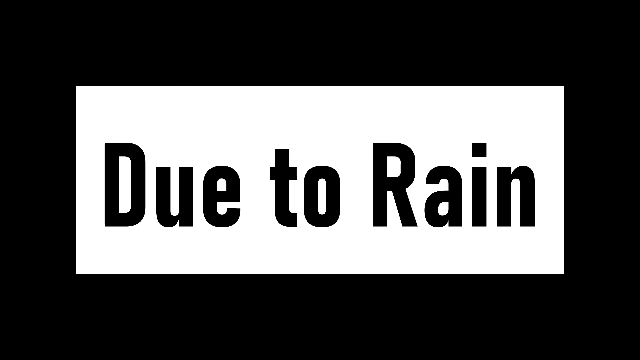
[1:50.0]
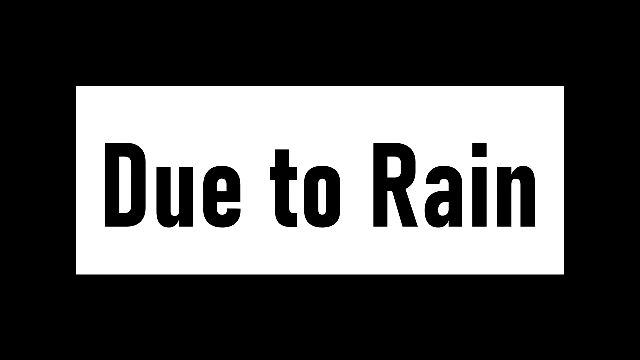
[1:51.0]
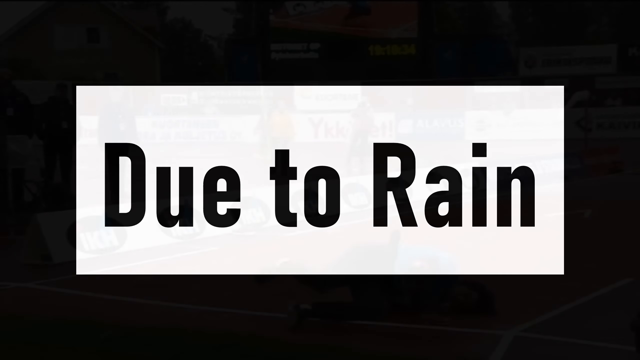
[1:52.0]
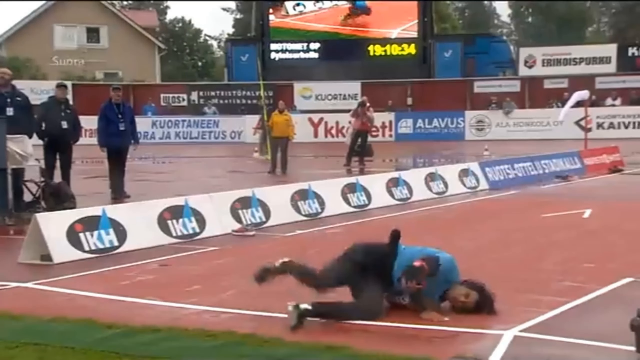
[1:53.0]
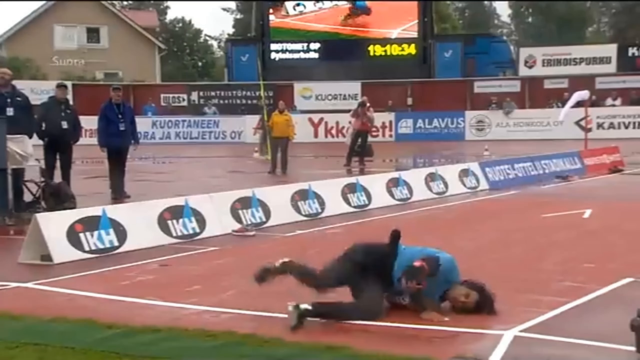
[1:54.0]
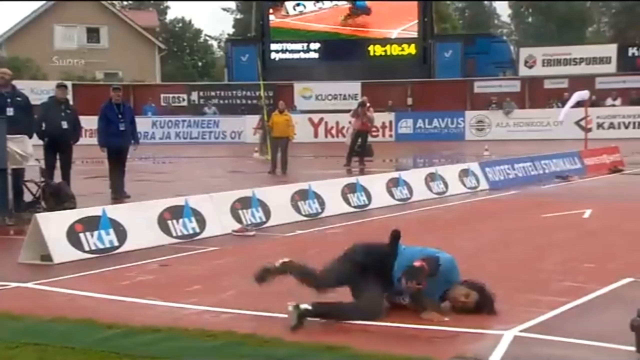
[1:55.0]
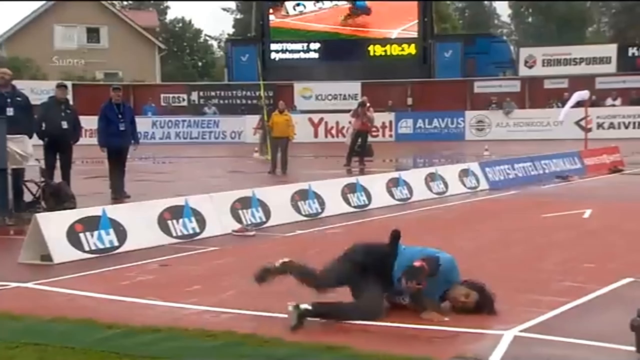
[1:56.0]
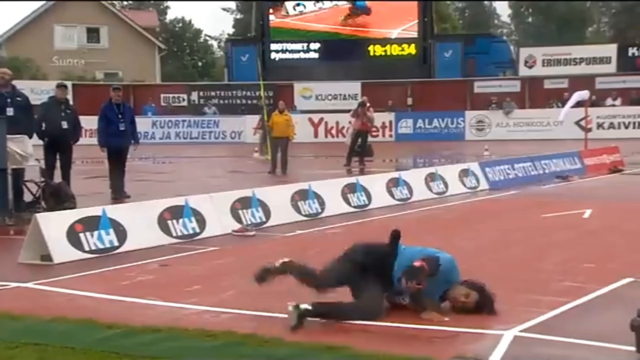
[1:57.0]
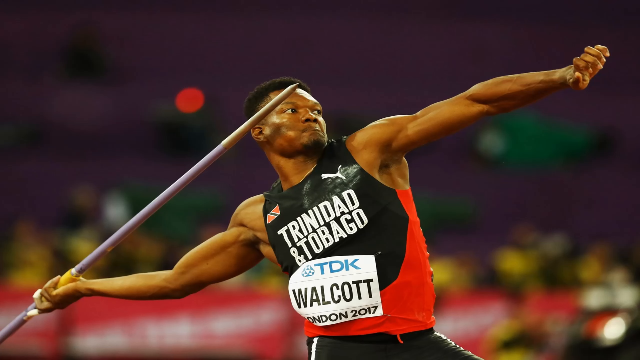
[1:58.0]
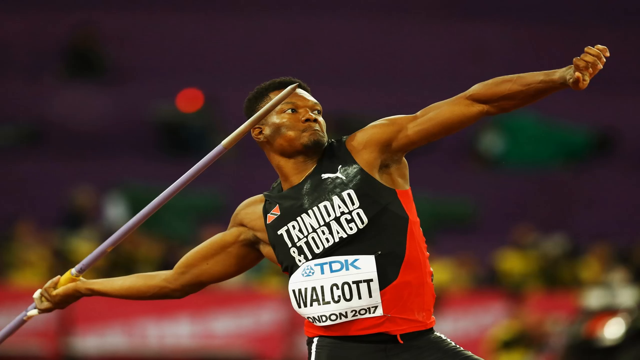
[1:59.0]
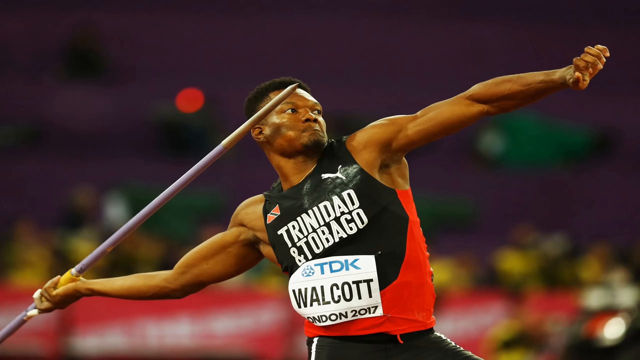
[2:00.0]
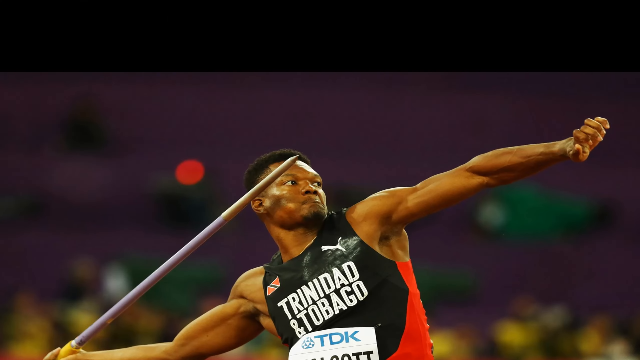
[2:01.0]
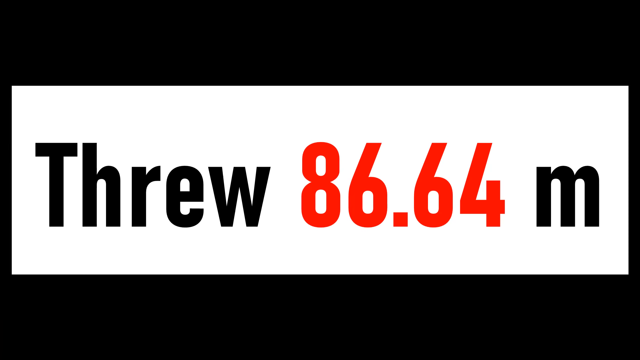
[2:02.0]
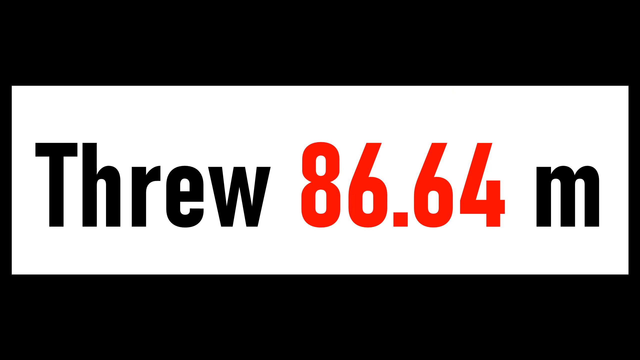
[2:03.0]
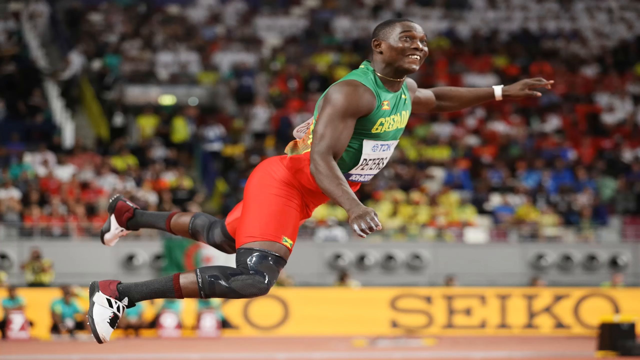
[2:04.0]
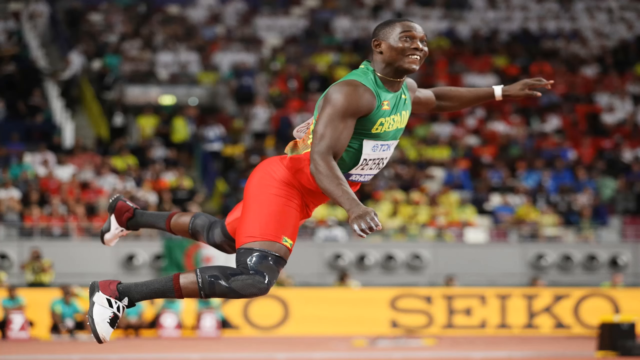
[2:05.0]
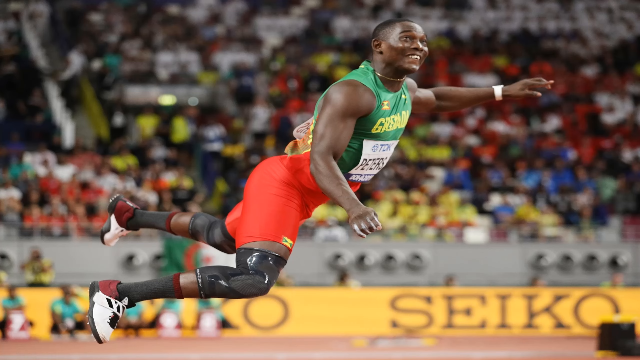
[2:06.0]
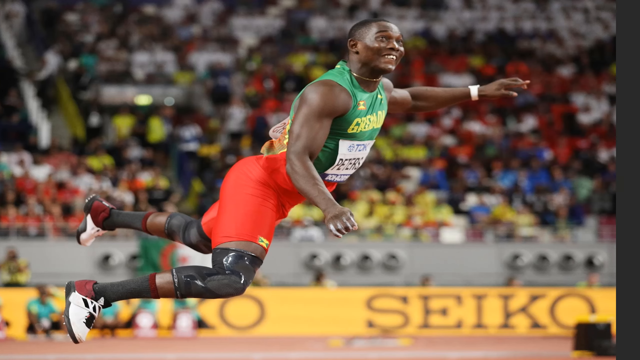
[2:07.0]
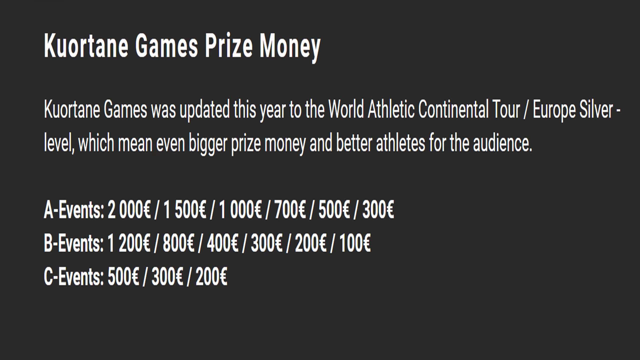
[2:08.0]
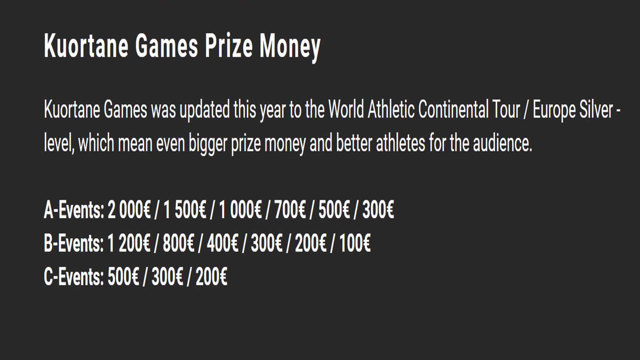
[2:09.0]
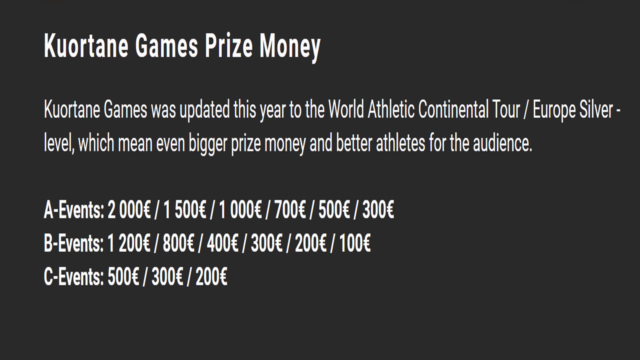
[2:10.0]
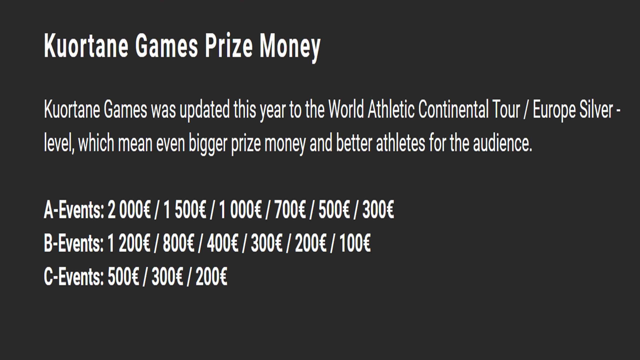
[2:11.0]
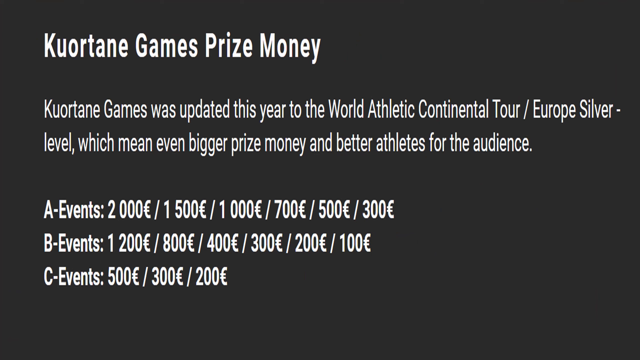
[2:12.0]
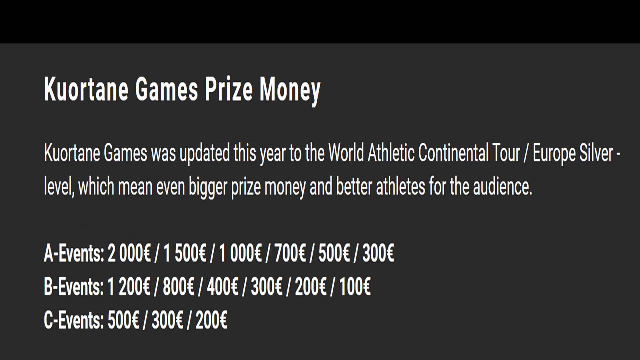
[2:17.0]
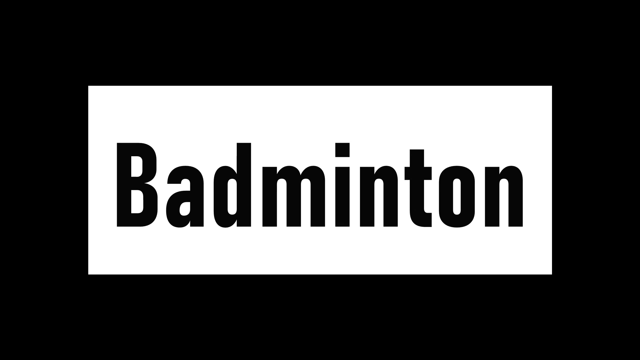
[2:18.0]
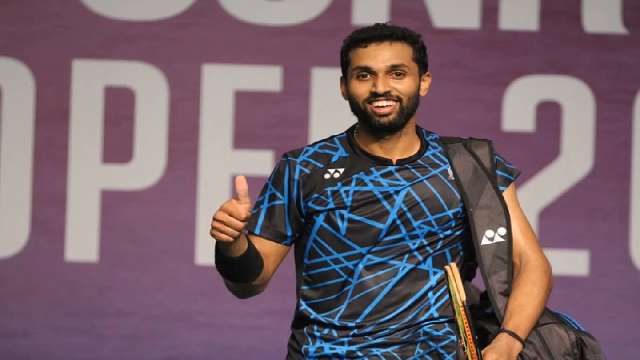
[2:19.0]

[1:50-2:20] Writing on a white screen reads "due to rain" in black lettering. The view moves to someone lying on the ground on what looks like a field track, or possibly just after a jump, with their head on the ground. It then flashes to a guy from Trinidad and Tobago throwing a javelin, with text reading "86.64 m". A guy jumps in the air; he looks like he might be a soccer player, wearing a green jersey, tight red shorts and some kind of cleats, with a smiling, happy face. He is black and appears to be in a large stadium, possibly at an Olympic event. Text then reads "Quartan Games Prize Money" and "Quartan Games was updated this year to the World Athletic Continental Tour Europe Silver Level, which means even bigger prize money and better athletes for the audience." A list of events and payoffs follows, resembling sports betting. Finally the word "Badminton" flashes up along with a guy in a black and blue jersey.